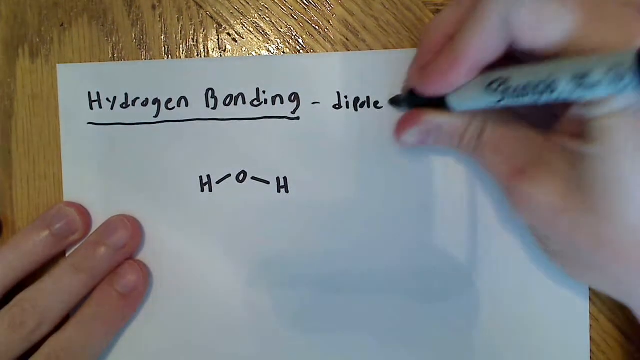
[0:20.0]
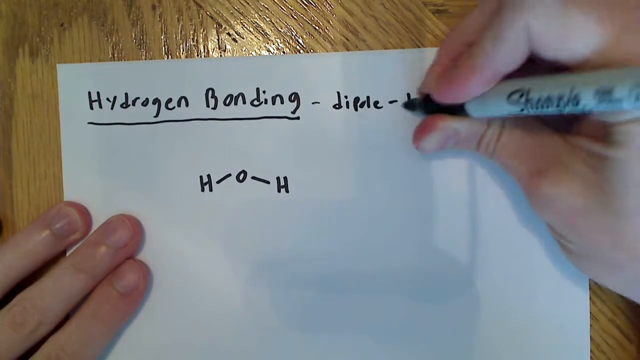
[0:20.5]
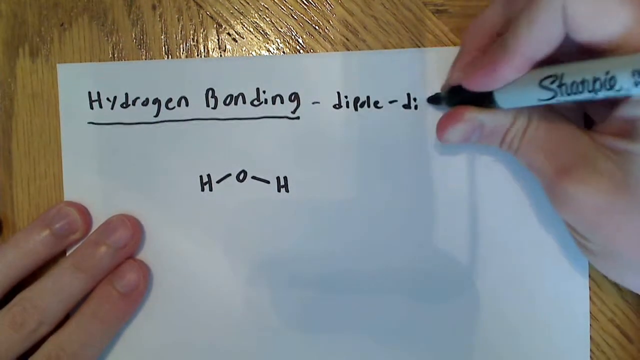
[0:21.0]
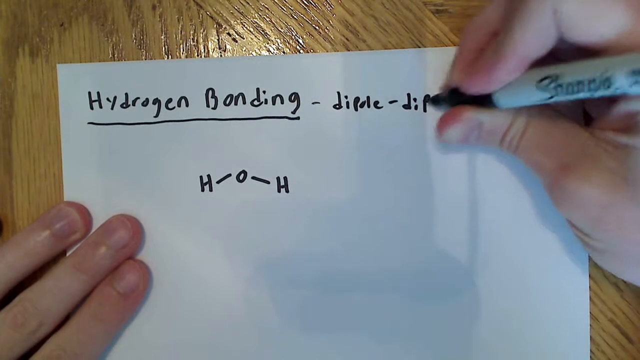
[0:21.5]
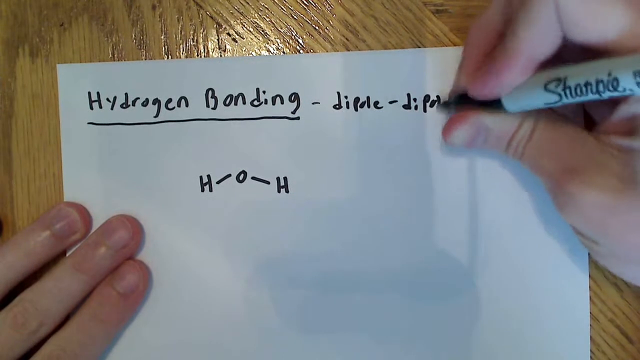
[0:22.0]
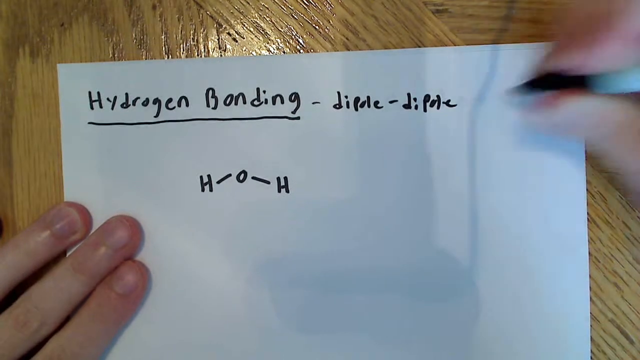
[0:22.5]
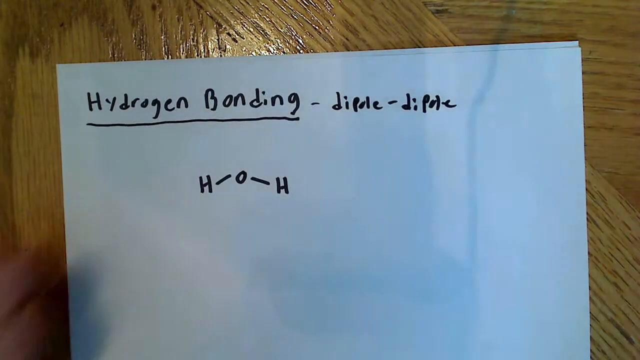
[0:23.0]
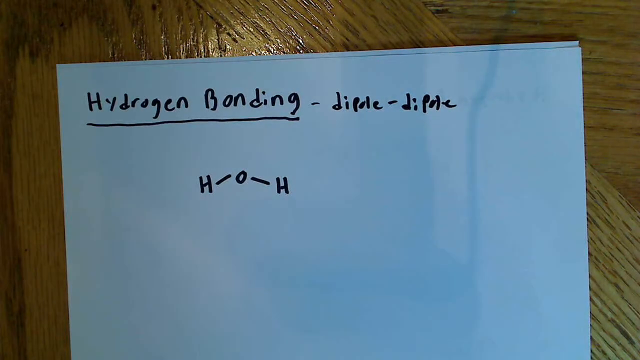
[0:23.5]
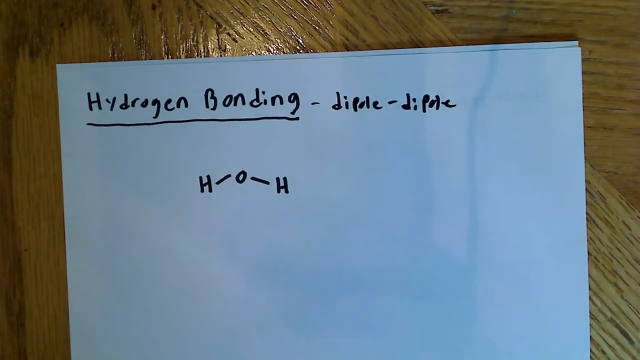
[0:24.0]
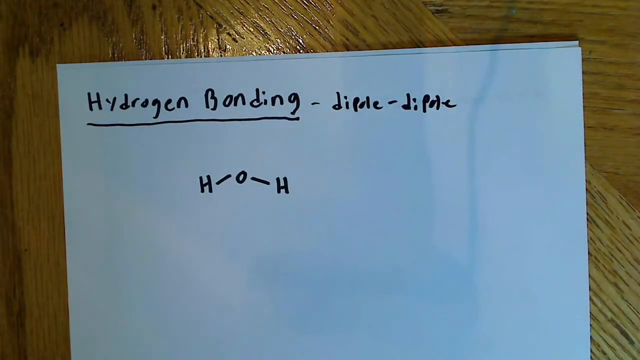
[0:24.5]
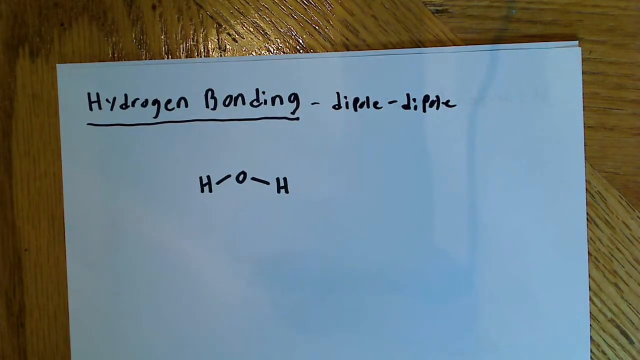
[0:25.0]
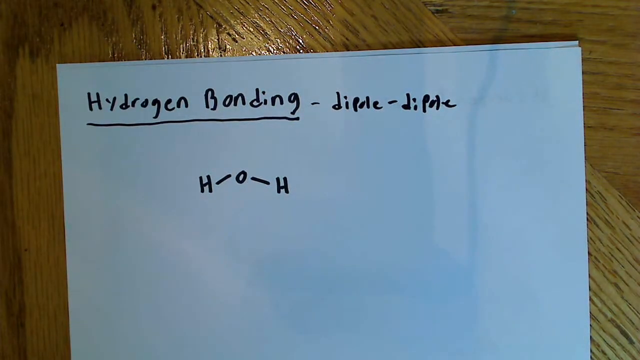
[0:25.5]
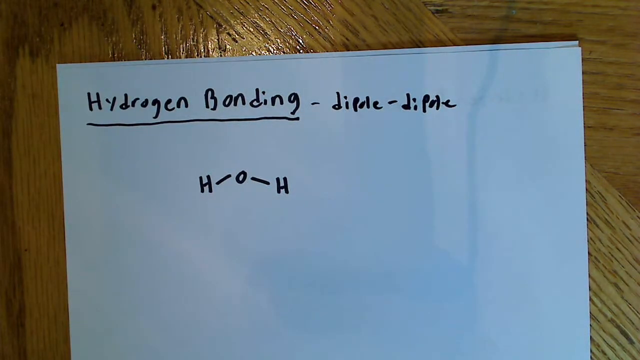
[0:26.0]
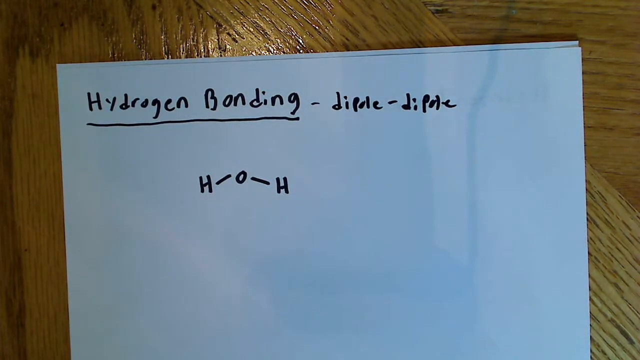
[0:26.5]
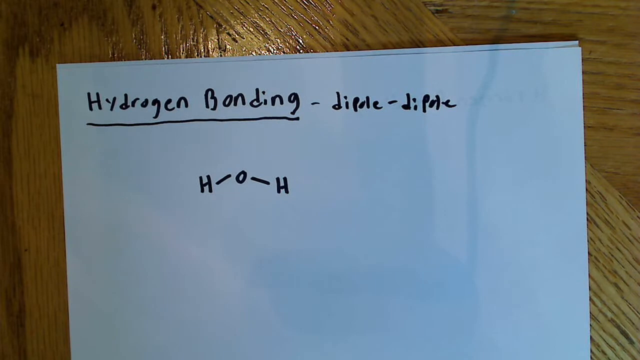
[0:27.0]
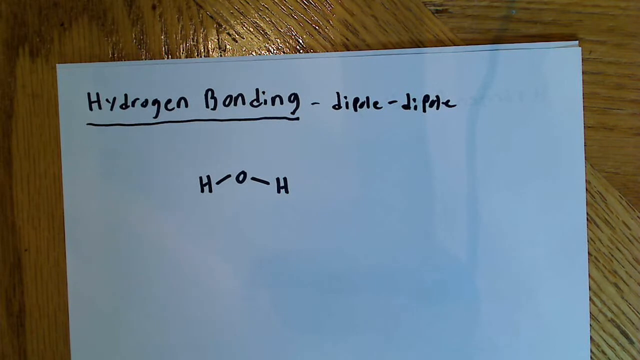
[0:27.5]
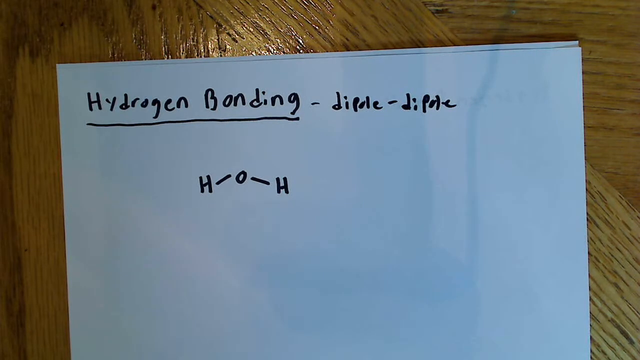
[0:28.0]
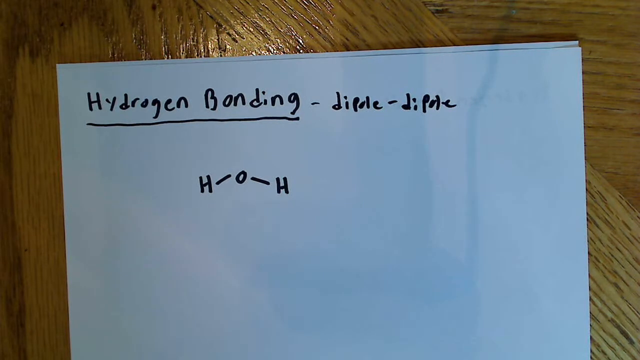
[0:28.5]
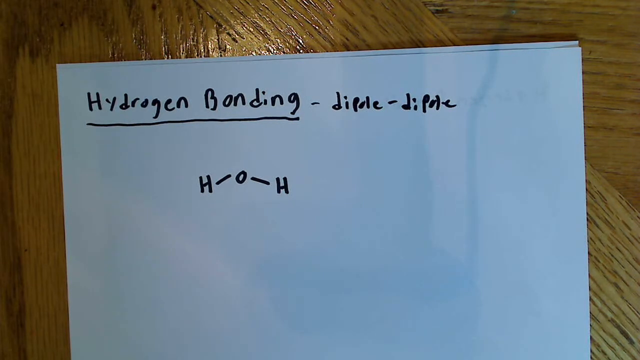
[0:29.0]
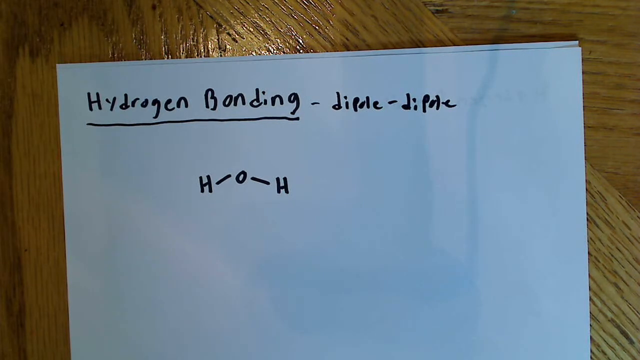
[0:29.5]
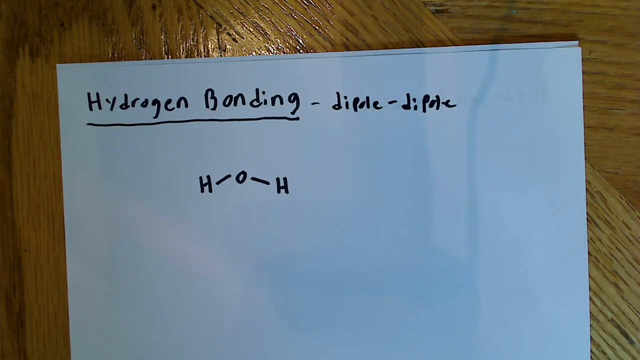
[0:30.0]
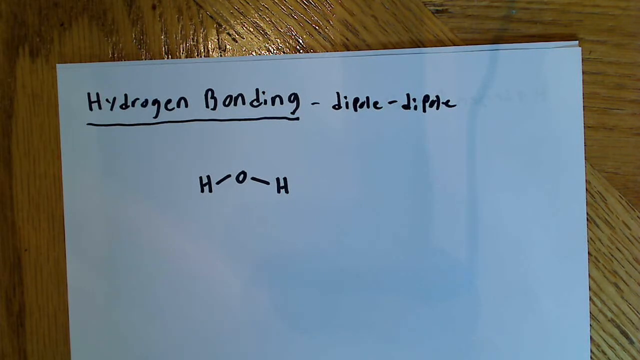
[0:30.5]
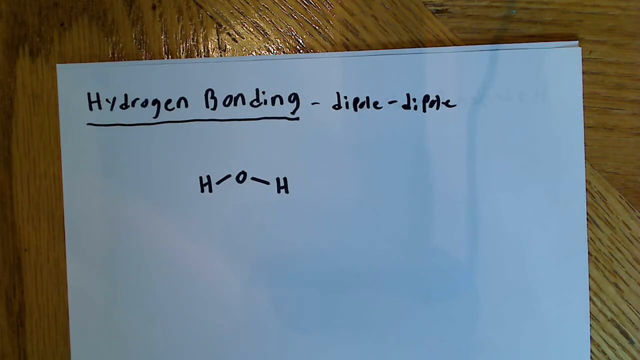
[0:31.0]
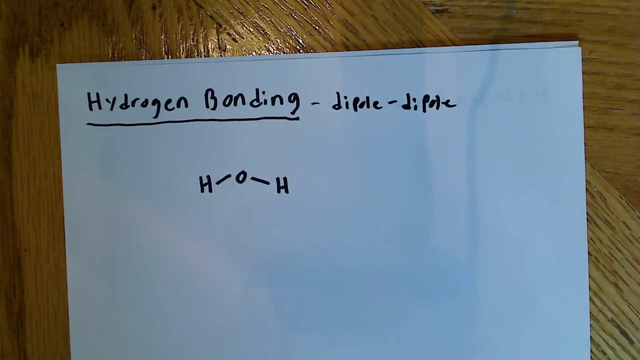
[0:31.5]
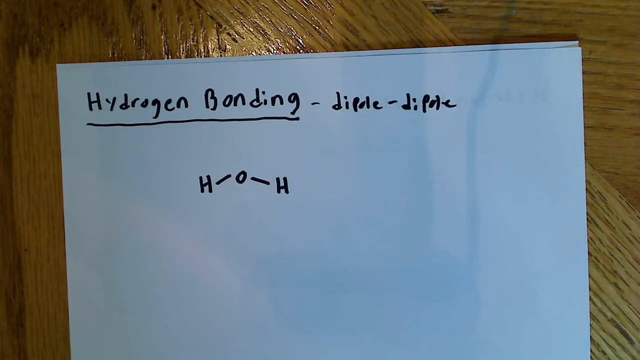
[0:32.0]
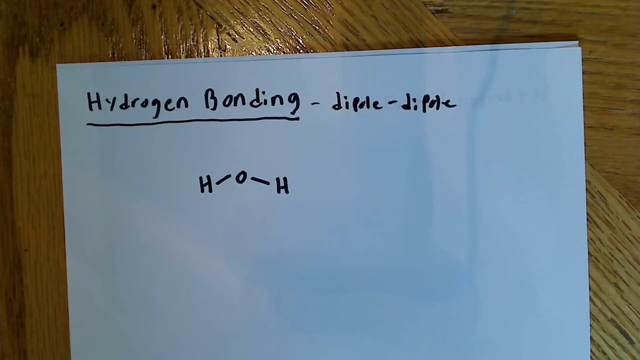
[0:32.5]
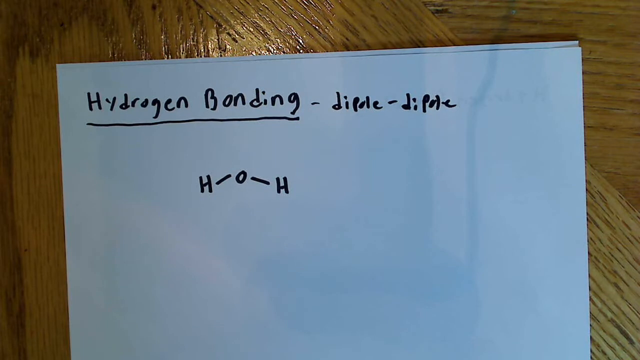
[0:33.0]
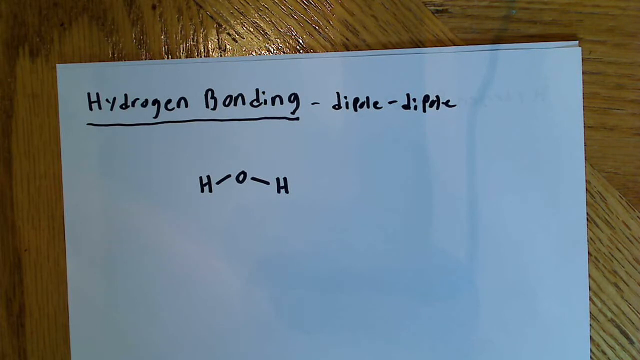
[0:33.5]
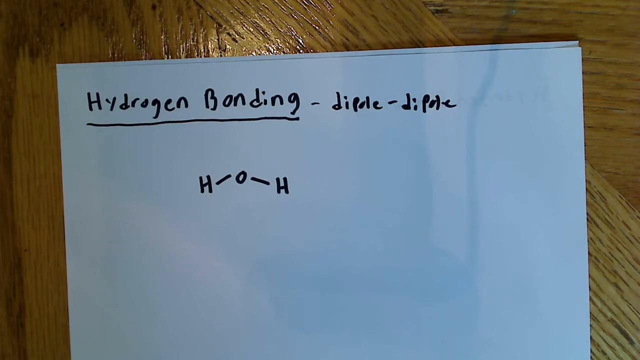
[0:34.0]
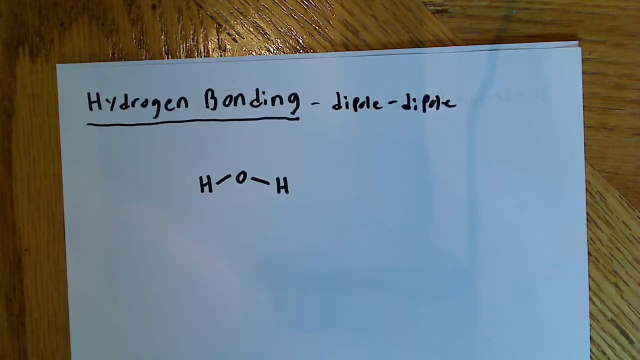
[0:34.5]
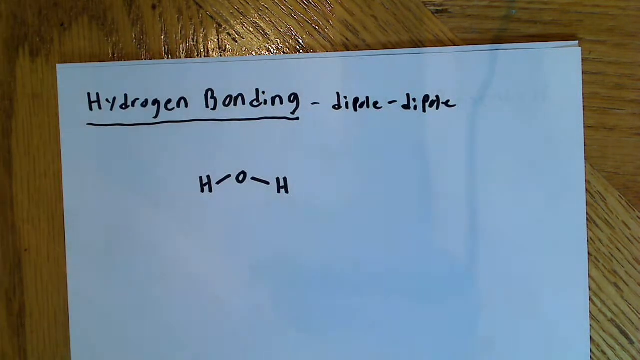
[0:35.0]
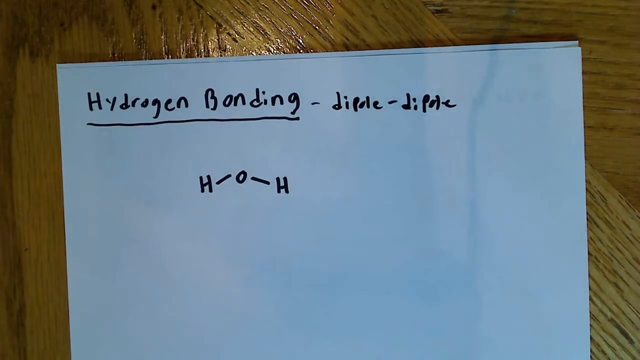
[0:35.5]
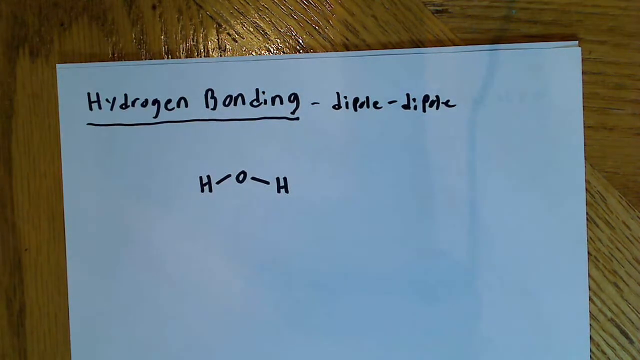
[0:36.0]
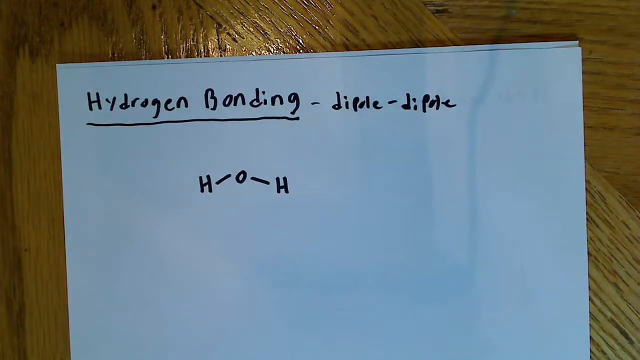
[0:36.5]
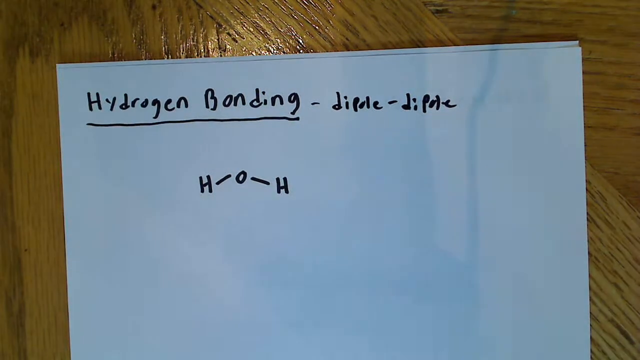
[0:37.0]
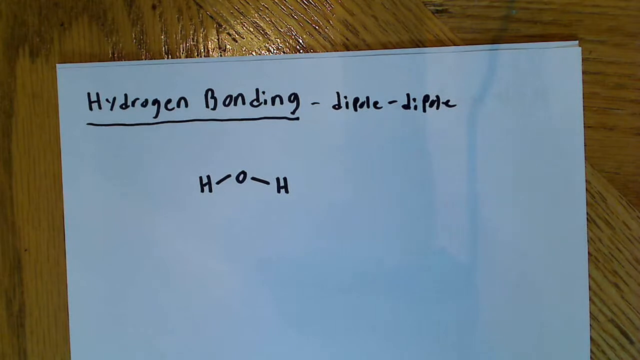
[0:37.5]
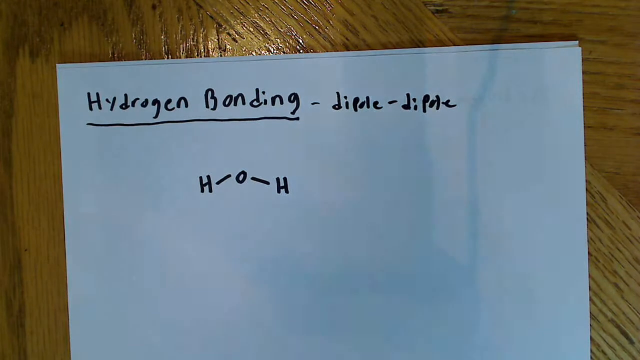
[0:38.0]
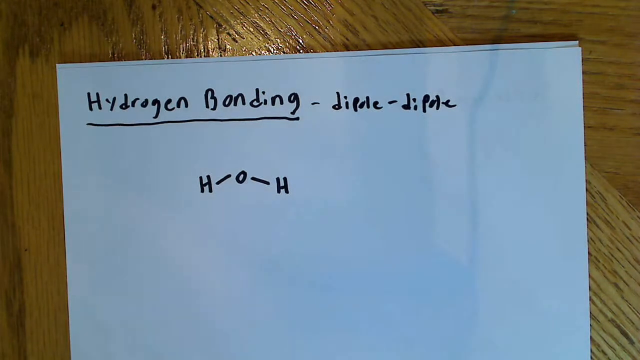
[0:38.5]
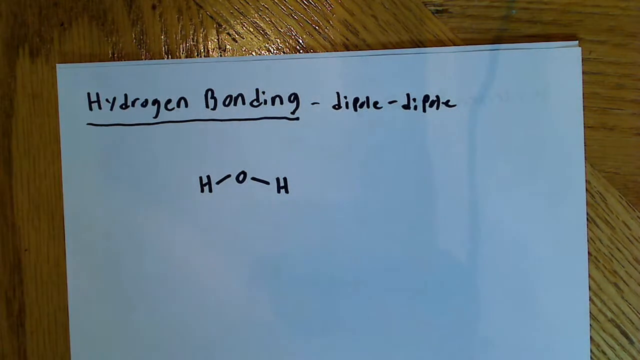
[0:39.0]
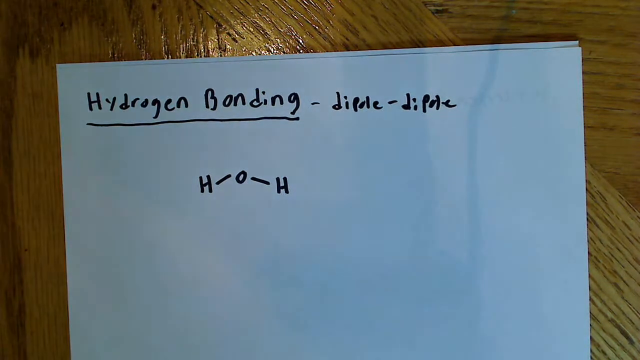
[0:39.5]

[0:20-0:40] Two stacked pieces of white printer paper lie on a wooden table with a heavily grained surface, so only the top sheet is visible. In the top left, "Hydrogen Bonding" is written in Sharpie with the H and B capitalized, and it is underlined. Beneath it is a capital H, a dash angled slightly upward to the right, a capital O, and a dash angled slightly downward to the right to another capital H. At the top right, to the right of "Hydrogen Bonding," there is a dash, the word "Dipole," and another dash. Two hands of a white person with short fingernails are in the frame. Three fingers of the left hand, the index, middle and ring fingers, hold down the paper. The right hand holds a black Sharpie with a white barrel and writes the word "Dipole" again, D-I-P-O-L-E. There is a lot of shadow at the bottom of the video, with shadows sort of coming from the right. After writing the word, the hands leave the frame, and light from the right casts shadows onto the paper.